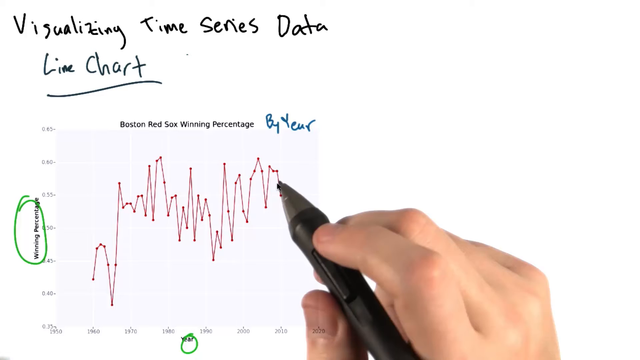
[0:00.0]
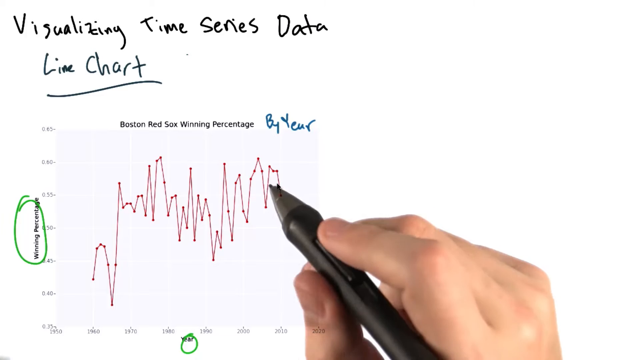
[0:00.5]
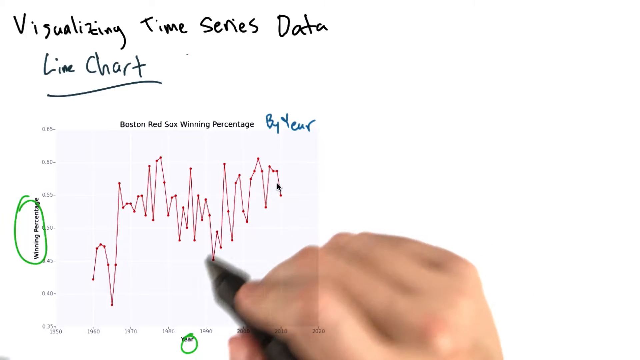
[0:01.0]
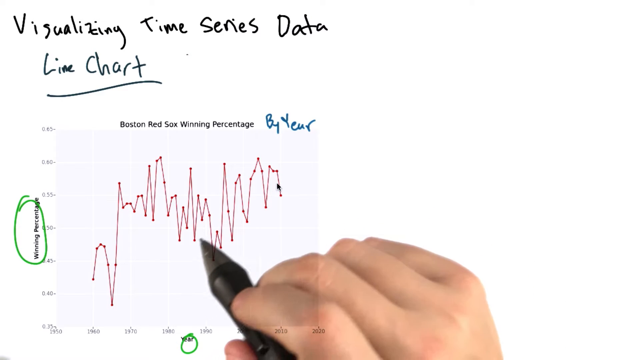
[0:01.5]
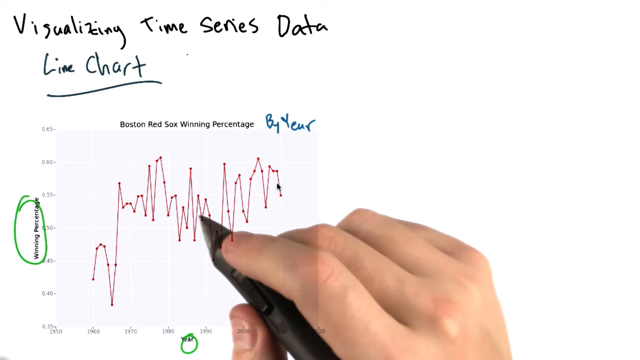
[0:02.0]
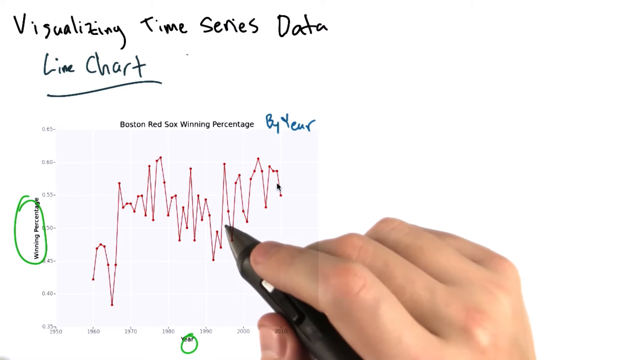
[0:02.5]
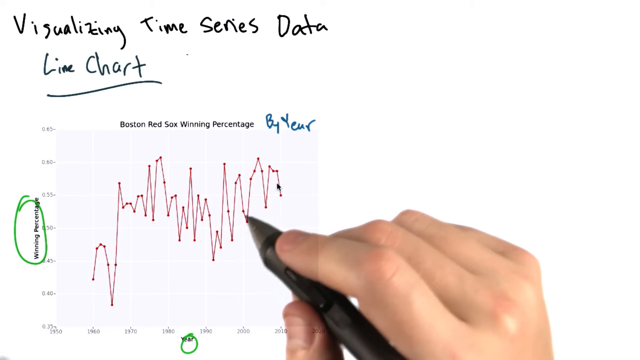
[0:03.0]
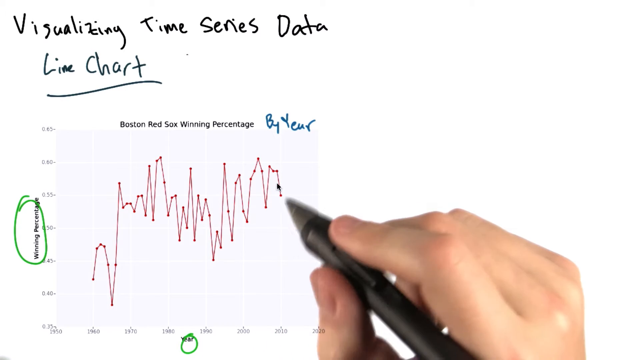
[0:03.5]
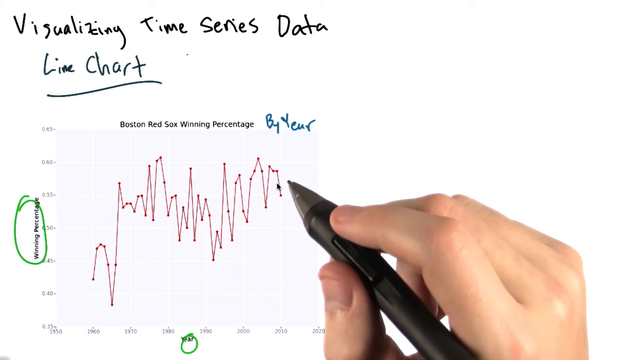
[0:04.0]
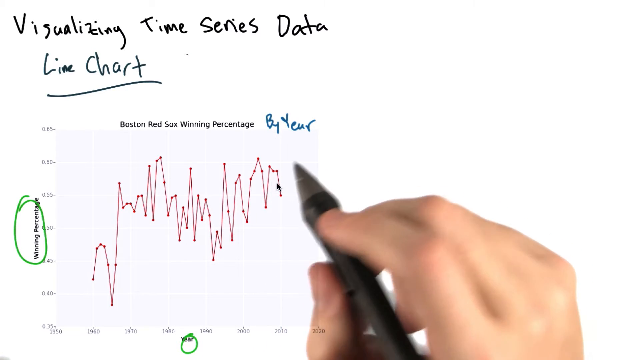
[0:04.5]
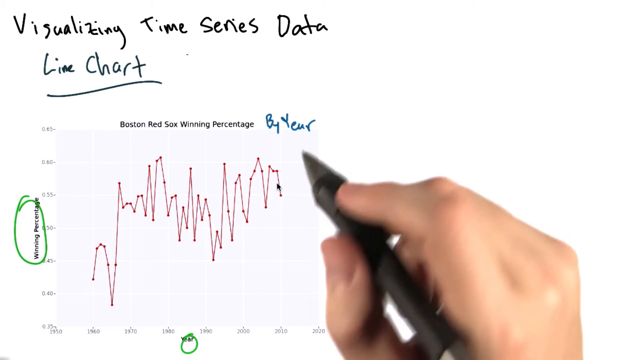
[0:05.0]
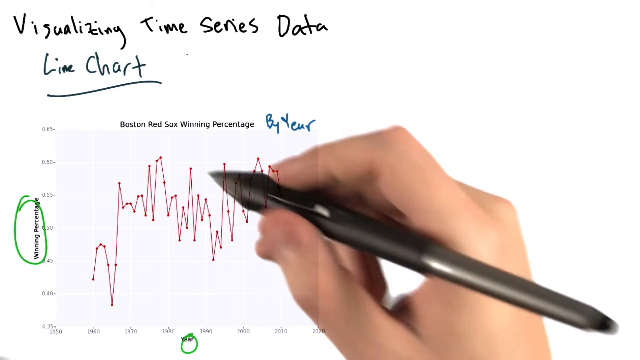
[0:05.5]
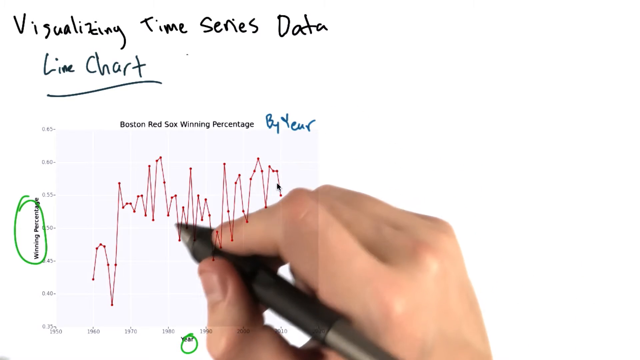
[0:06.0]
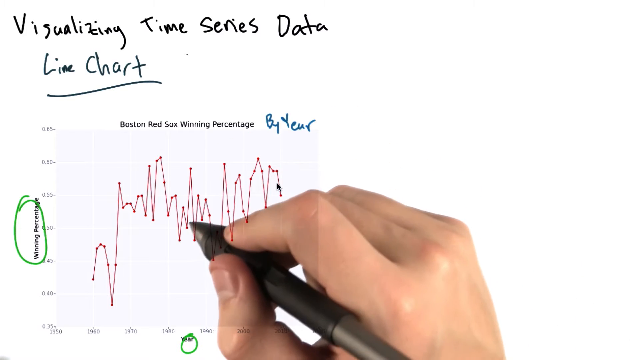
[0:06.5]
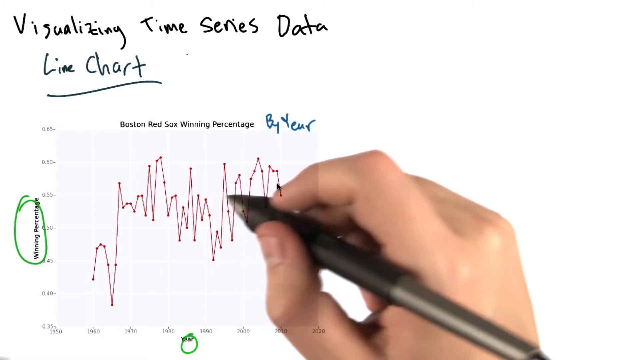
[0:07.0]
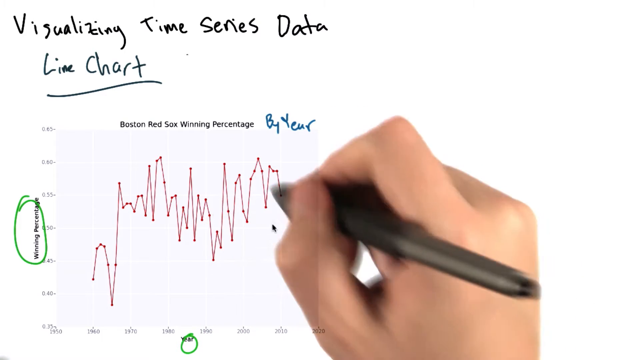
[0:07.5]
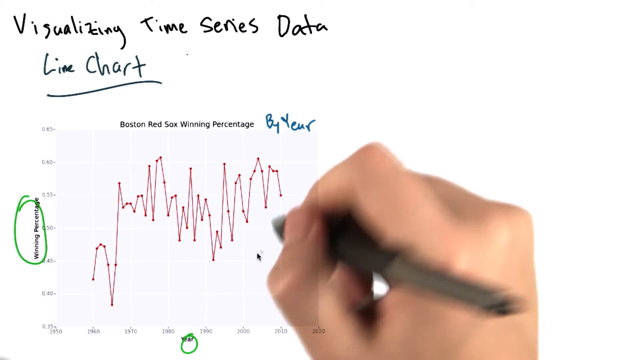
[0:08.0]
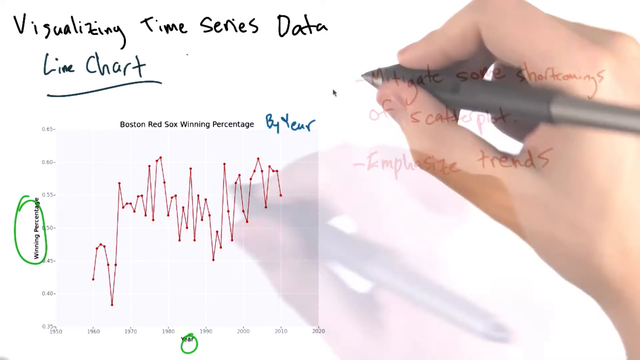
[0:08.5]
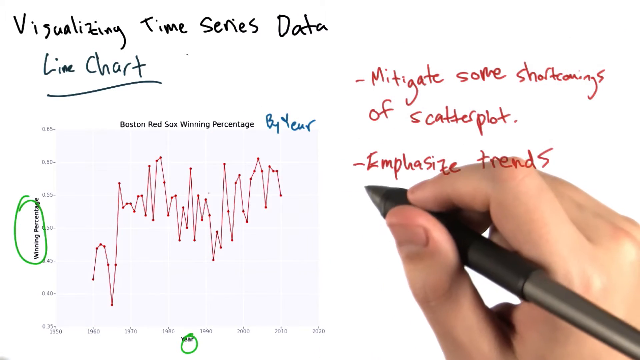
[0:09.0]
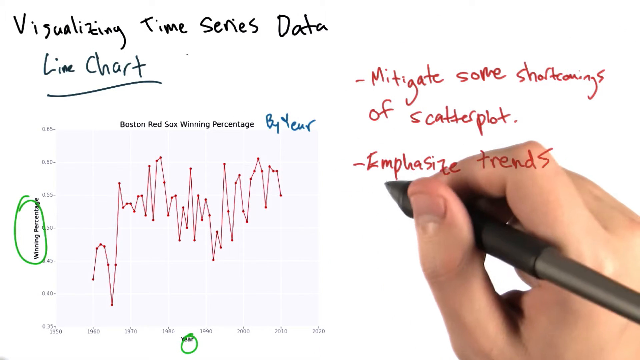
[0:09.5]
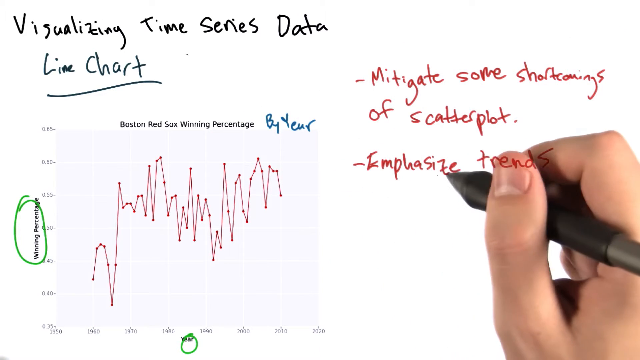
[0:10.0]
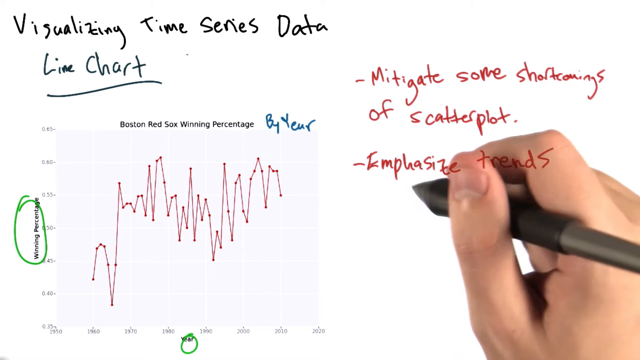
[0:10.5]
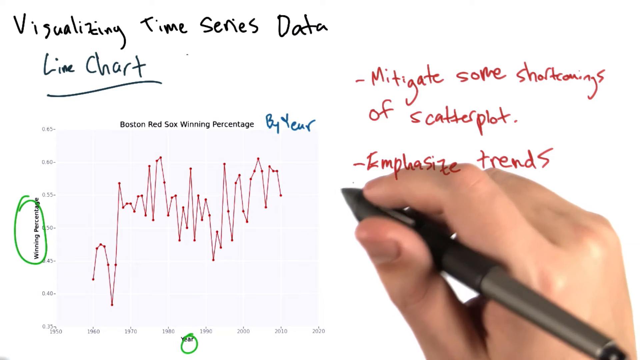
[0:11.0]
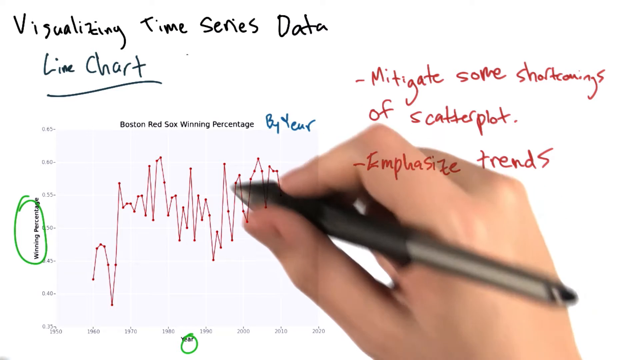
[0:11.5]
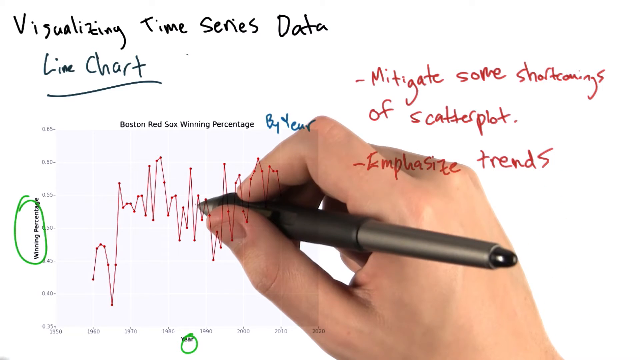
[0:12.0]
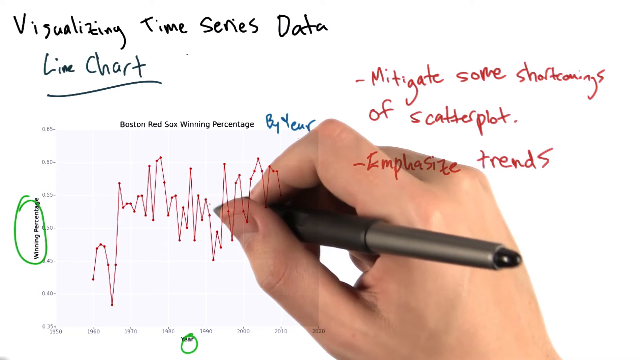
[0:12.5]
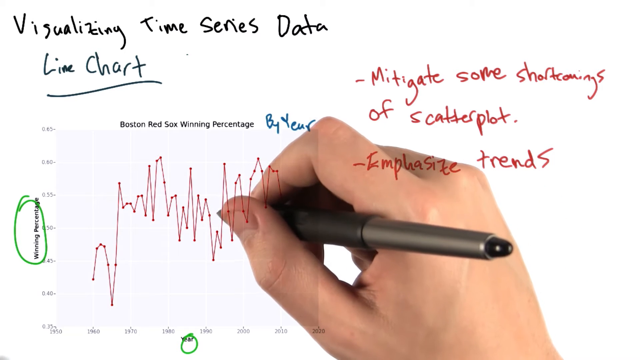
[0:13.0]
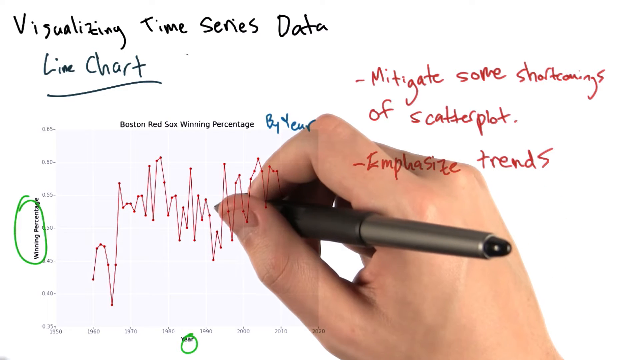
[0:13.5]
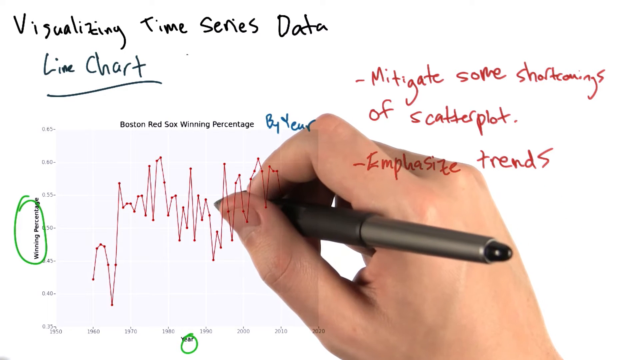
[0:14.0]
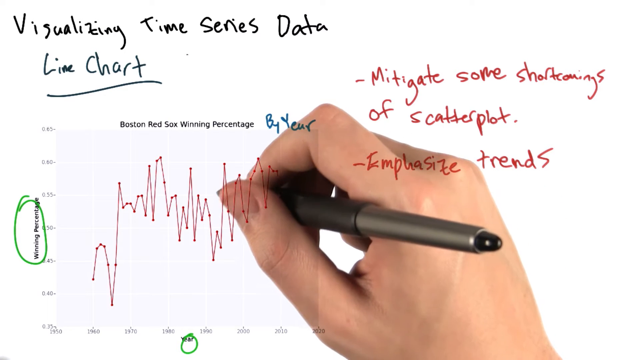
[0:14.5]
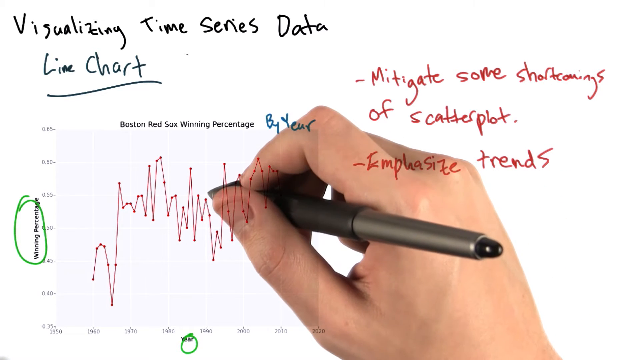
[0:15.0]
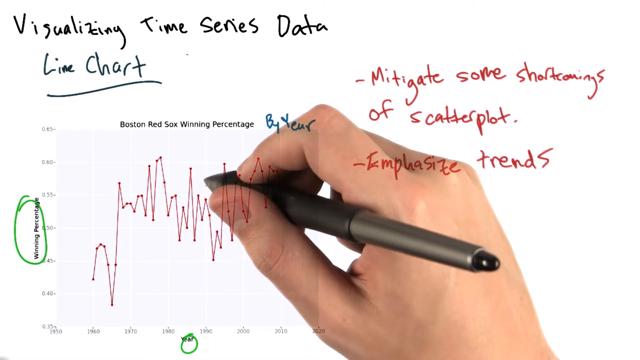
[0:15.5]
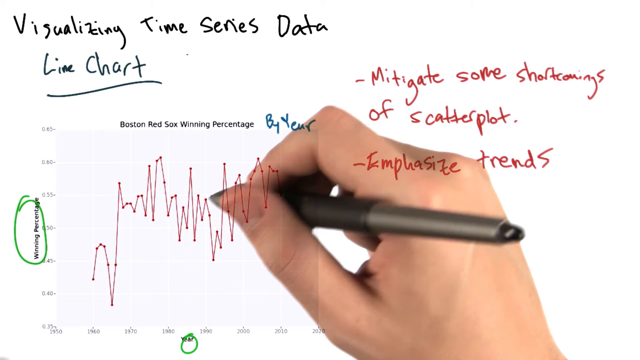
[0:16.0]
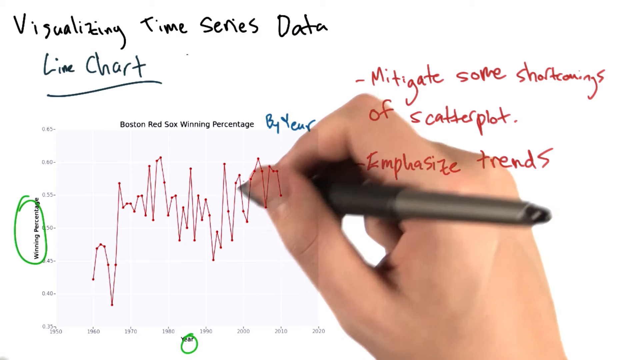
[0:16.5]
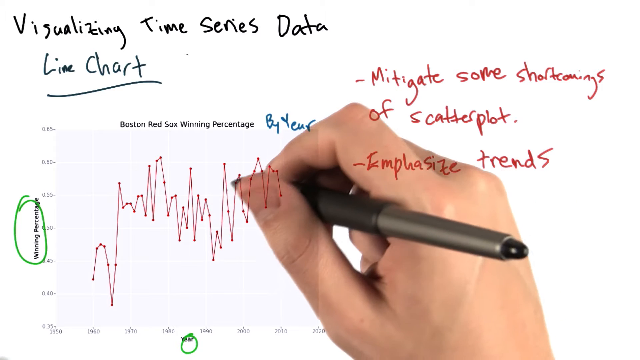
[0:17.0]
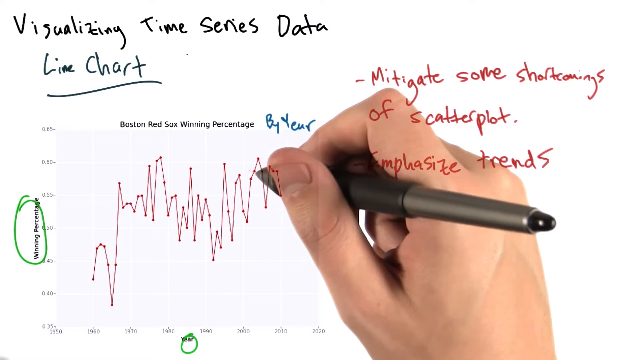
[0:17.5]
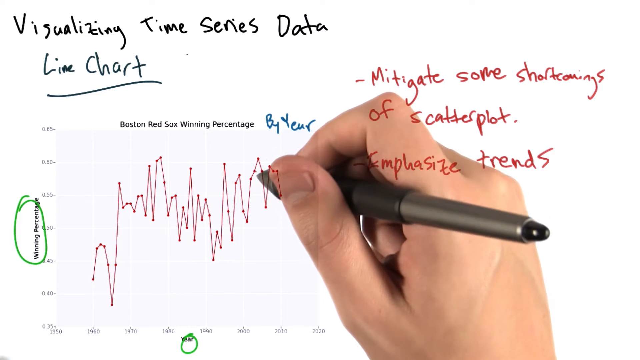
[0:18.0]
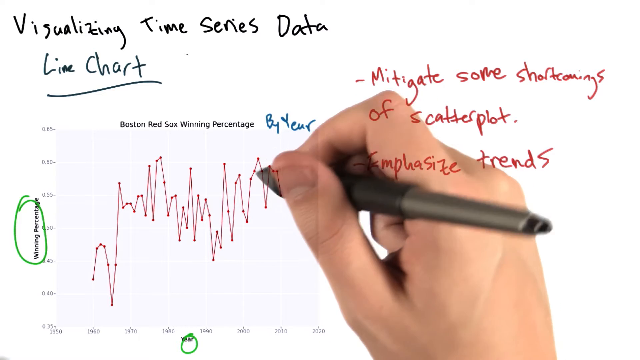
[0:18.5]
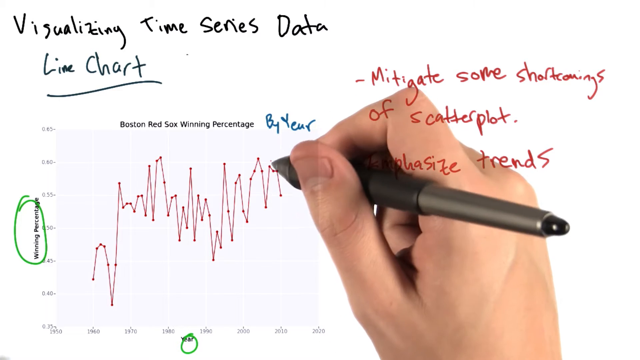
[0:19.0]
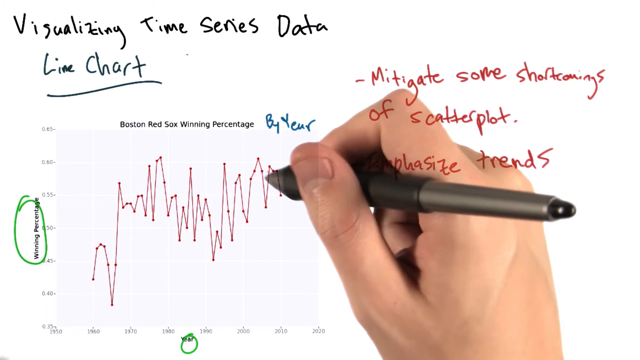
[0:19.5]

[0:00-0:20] Someone appears to be teaching about a line chart. At the top, handwritten text reads "visualizing time series data," and under this it says "line chart" with a line underneath. The person uses the Boston Red Sox winning percentage by year for the graph and puts different points on it. Off to the side it says "mitigate some shortcomings of scatterplot" and then "emphasize trends." Off to the left, "winning percentage" is circled in green. The person moves around the screen with what appears to be a digital pen, as if writing something, but nothing shows up on the screen. The person is apparently a white female or a white male. The handwriting is legible but a bit sloppy.